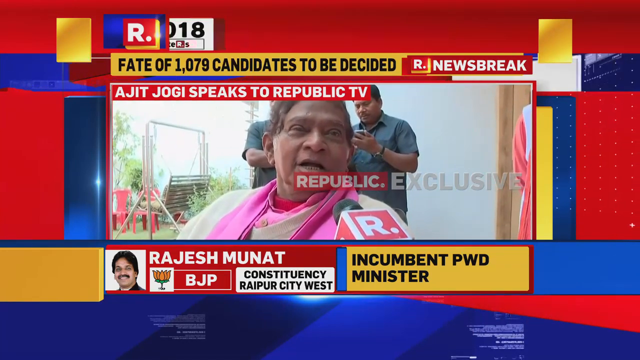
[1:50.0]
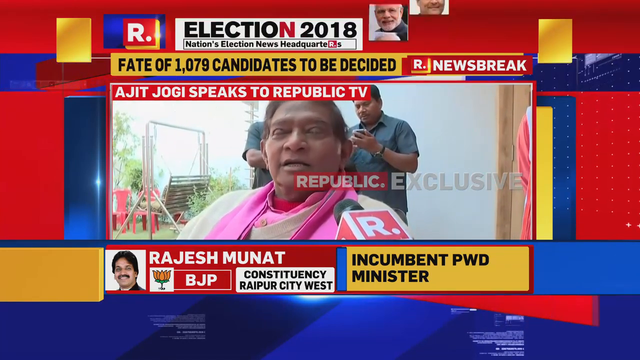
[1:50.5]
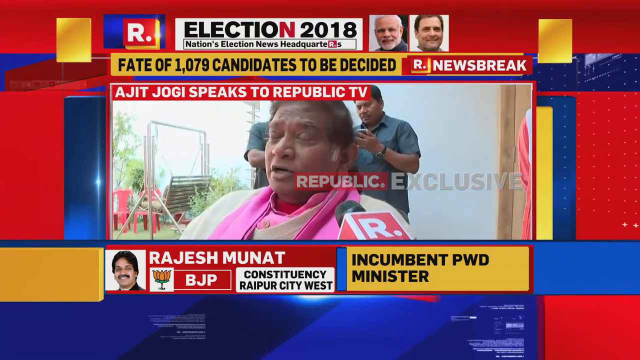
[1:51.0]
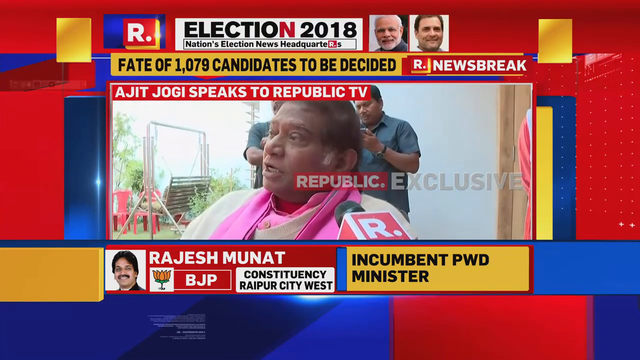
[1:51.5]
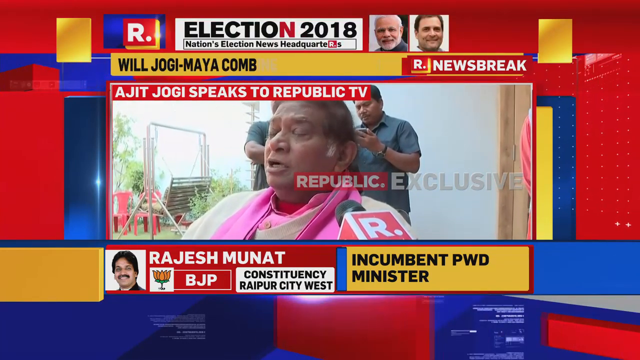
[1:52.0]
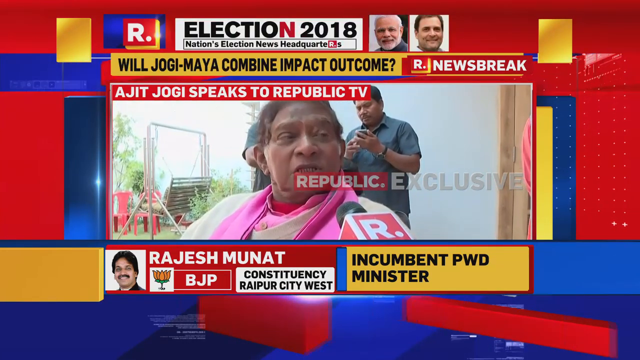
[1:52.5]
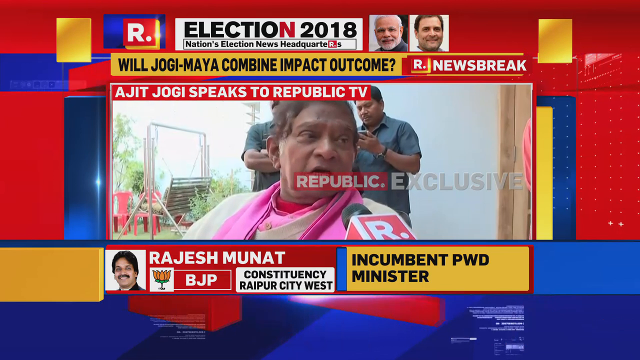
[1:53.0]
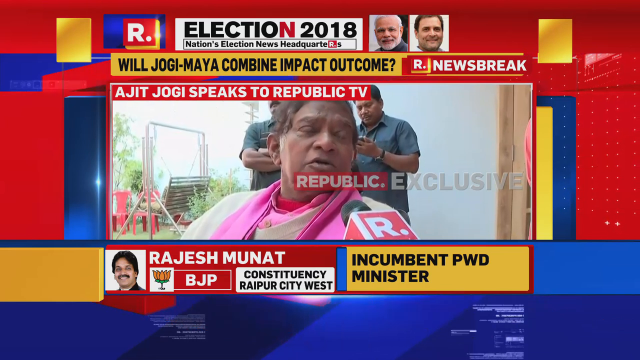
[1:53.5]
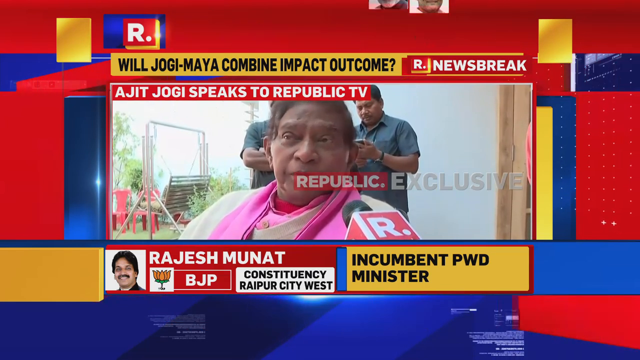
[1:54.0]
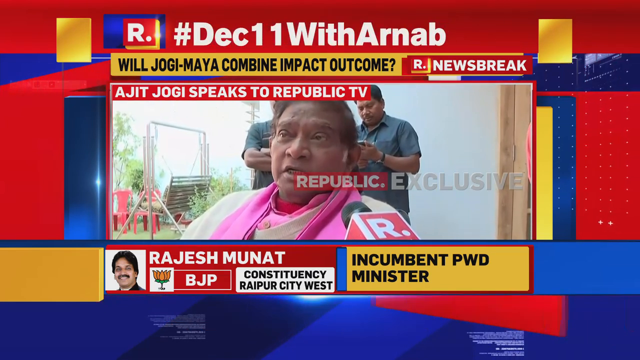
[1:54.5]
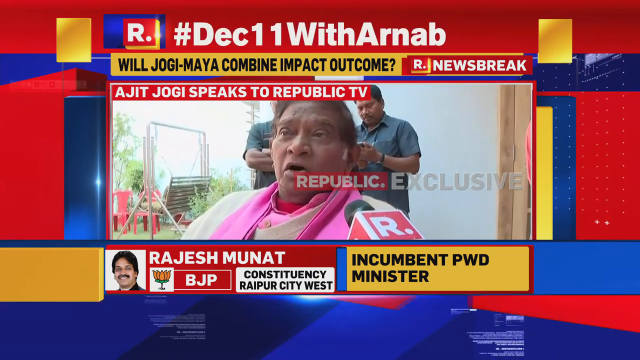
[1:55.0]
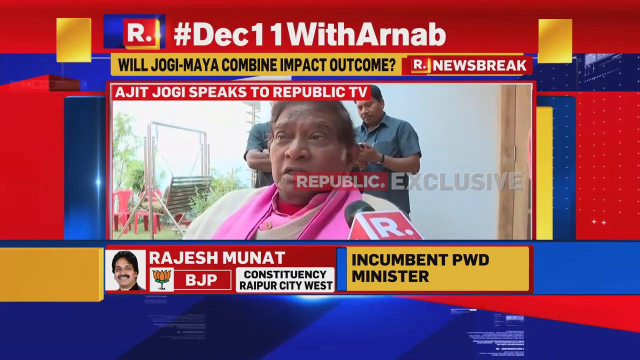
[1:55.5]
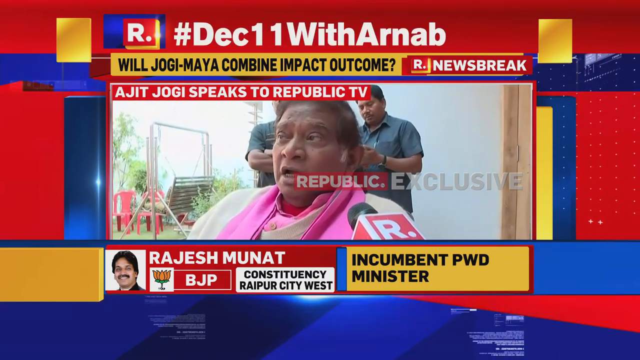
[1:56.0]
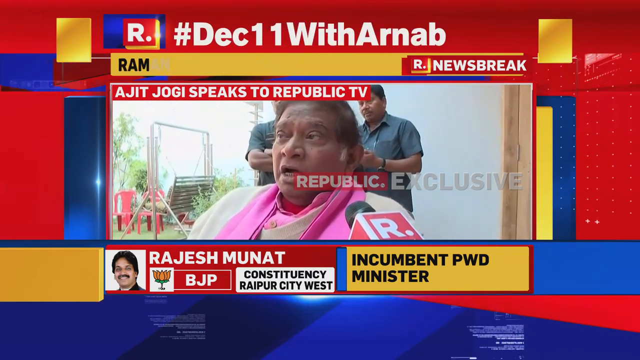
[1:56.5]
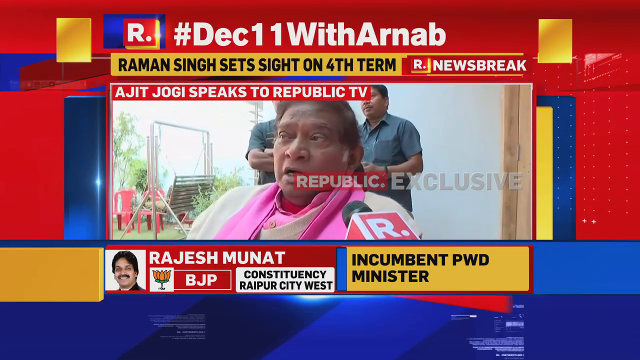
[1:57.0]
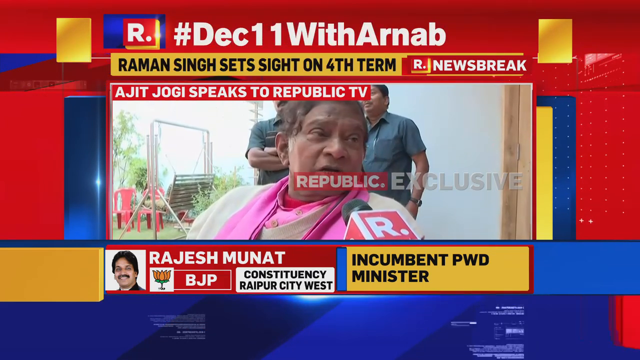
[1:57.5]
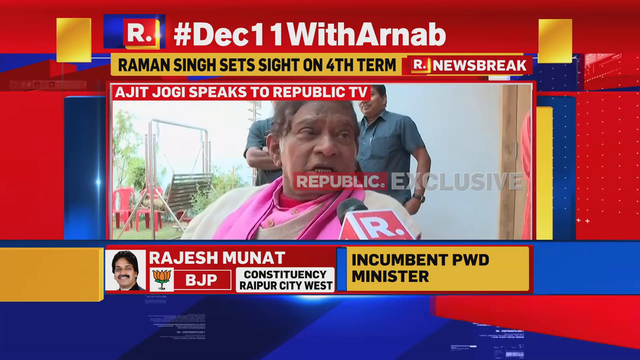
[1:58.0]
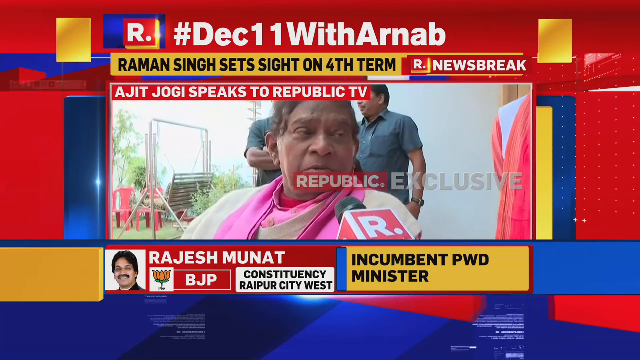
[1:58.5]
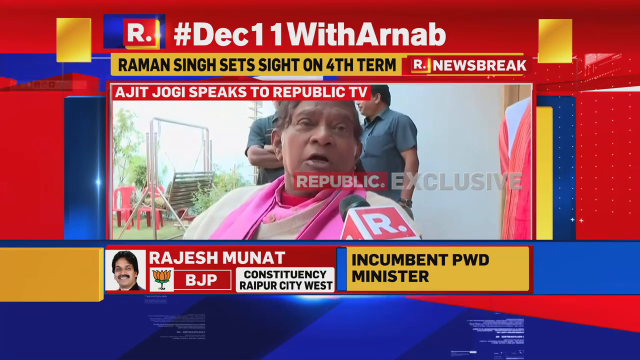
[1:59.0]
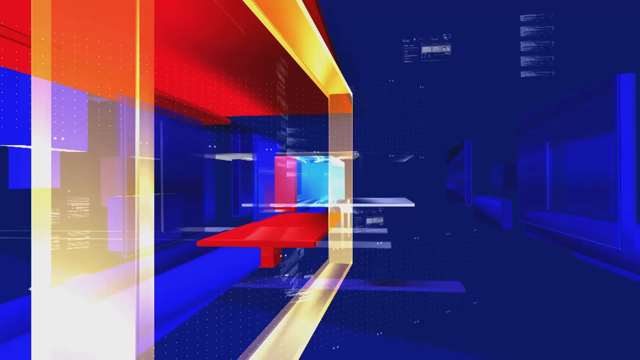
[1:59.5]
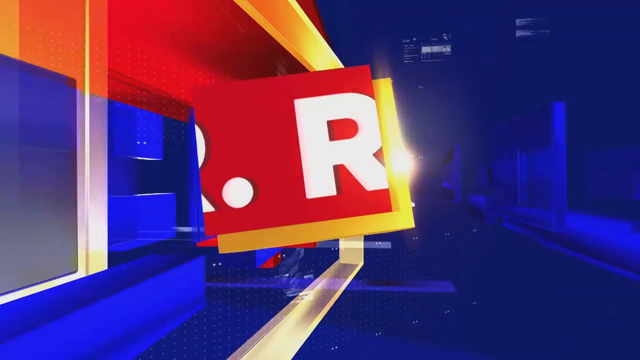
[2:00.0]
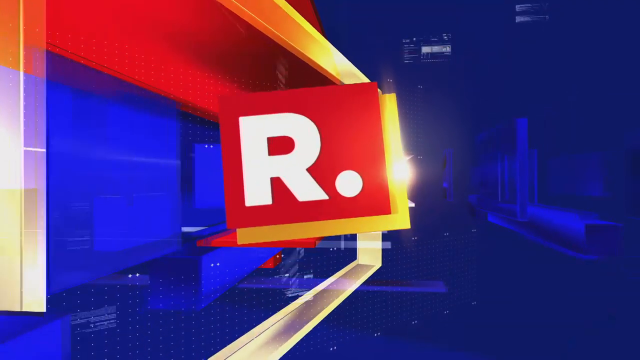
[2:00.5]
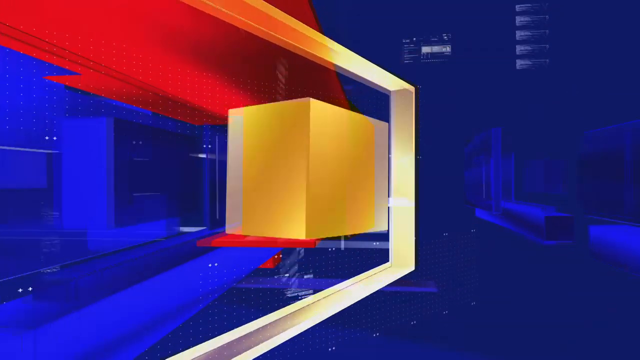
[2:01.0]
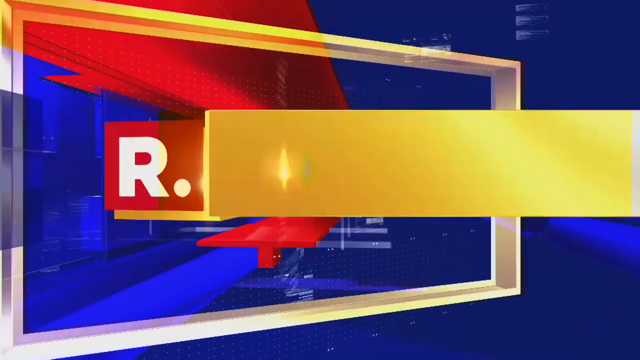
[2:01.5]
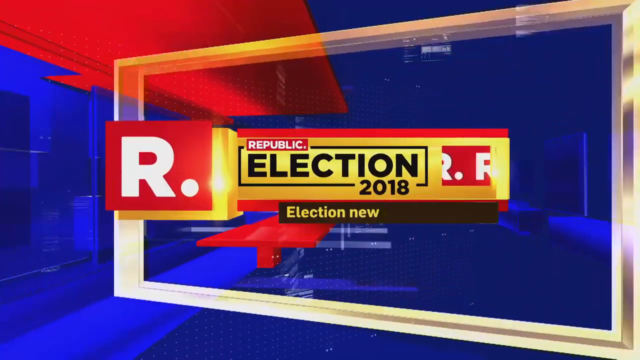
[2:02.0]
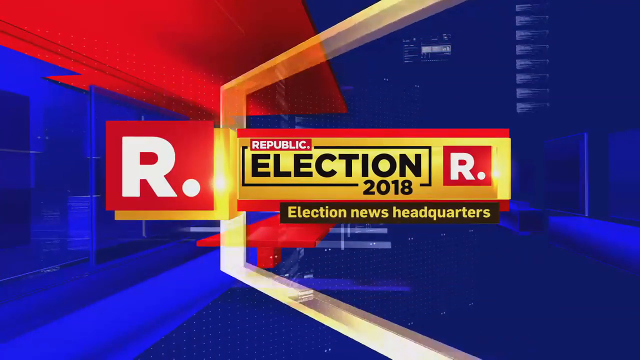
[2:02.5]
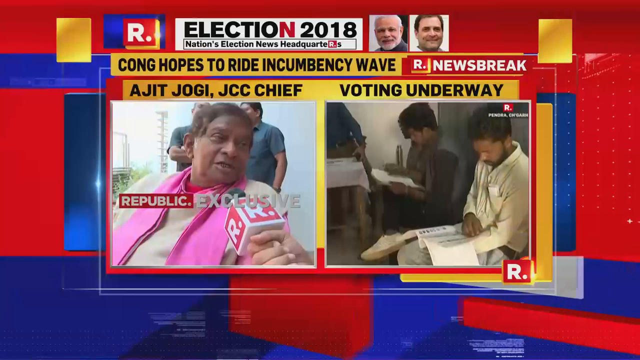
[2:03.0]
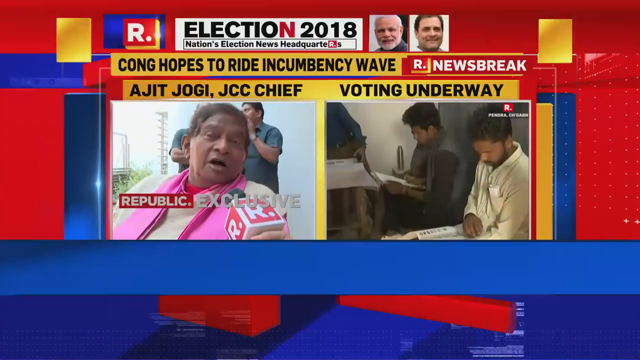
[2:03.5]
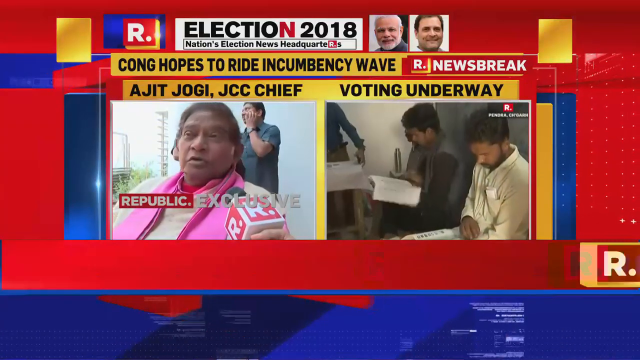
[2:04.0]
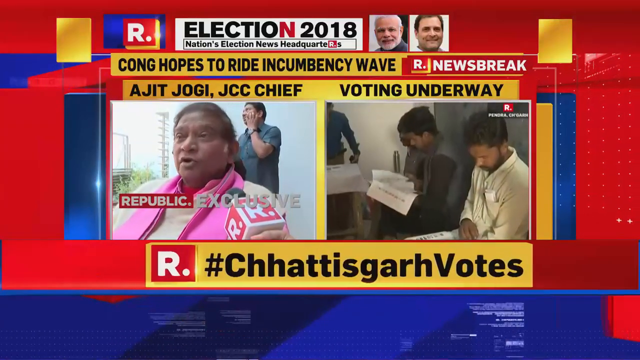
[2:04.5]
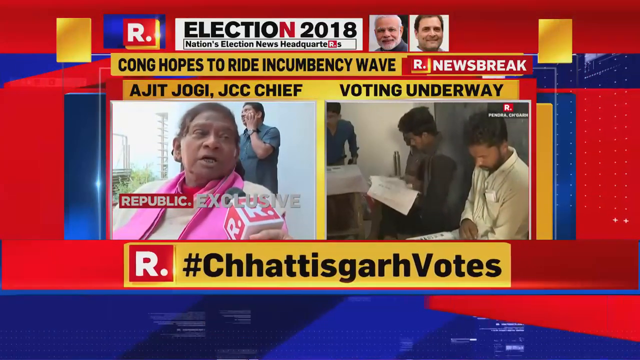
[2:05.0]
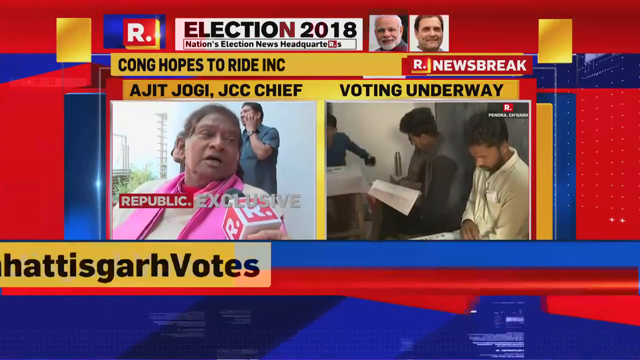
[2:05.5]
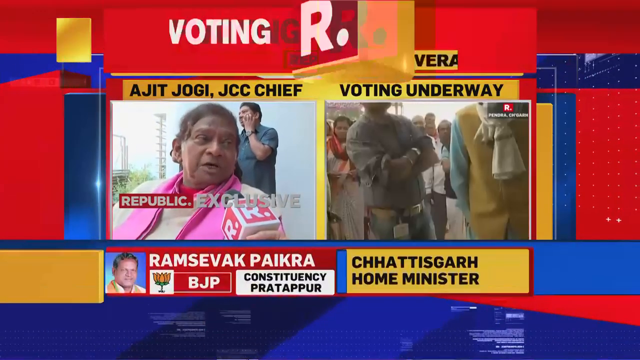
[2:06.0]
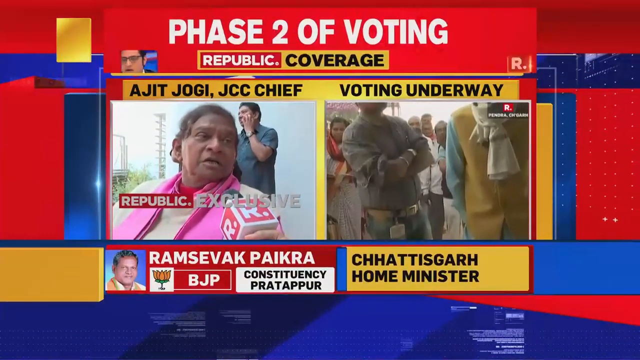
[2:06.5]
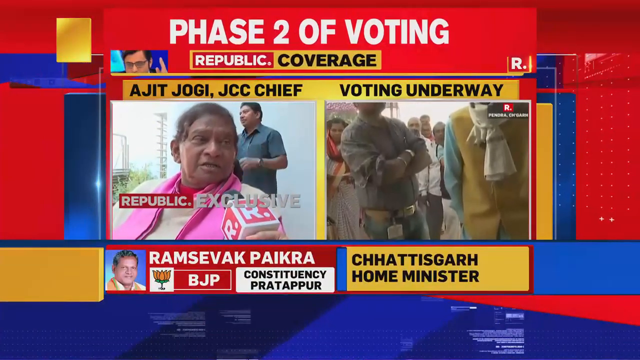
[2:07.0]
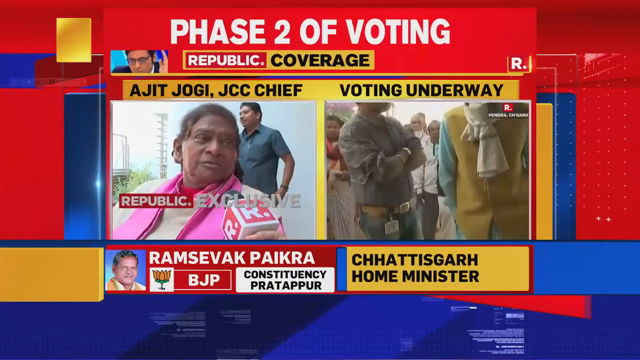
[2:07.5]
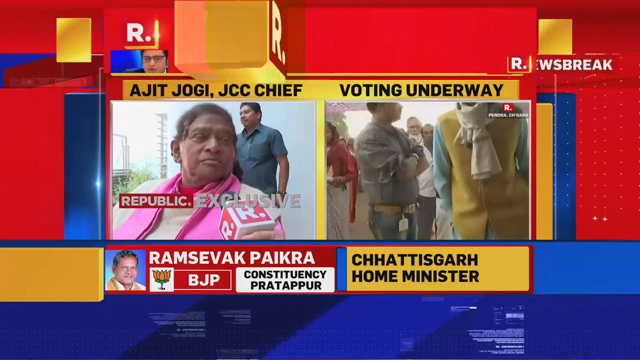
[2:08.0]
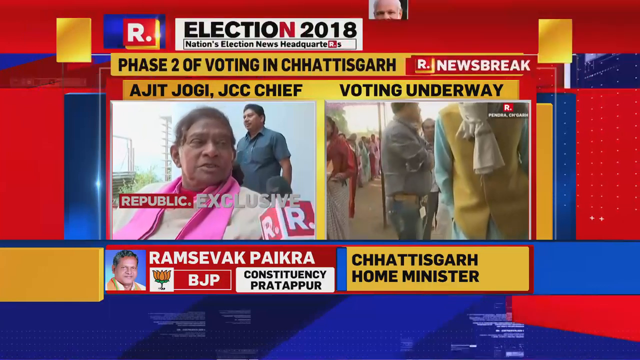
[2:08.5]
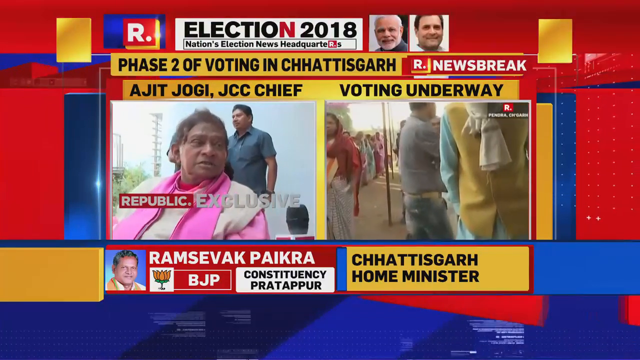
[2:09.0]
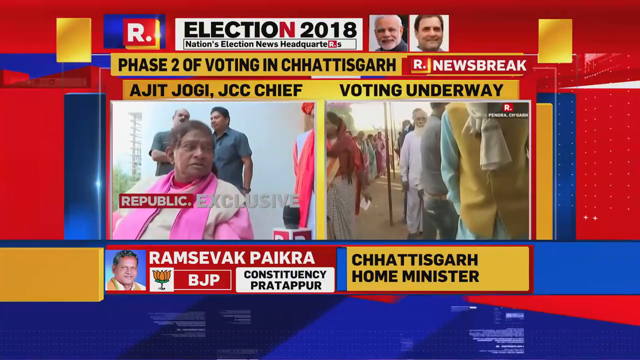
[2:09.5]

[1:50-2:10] The very busy graphics continue as the interview kind of comes to an end, and a short transition graphic with the rotating frame appears, showing "election 2018" and "election news headquarters" with the R period logo, against a blue and red background. The video switches back to the election 2018 graphic format, now with the interview with the woman in the pink scarf on the left side. On the right side are some individuals who look like they are sitting down and voting, one in dark clothes and one in whiter clothes. At the bottom, a text banner comes across from the right all the way to the left, the yellow text box that says "Chhattisgarh votes". The upper right switches from people voting to people standing and walking around on the streets, possibly waiting in line. The bottom graphic shows a new candidate, "Ramsevak Paikra", still with "BJP" and his photo on the left; a white text box says "constituency Pratappur", and the yellow text box to the right says "Chhattisgarh Home Minister".